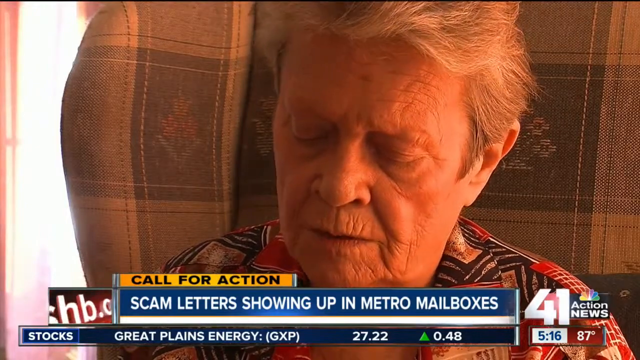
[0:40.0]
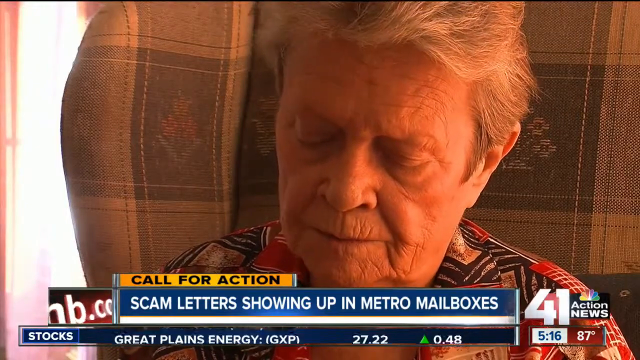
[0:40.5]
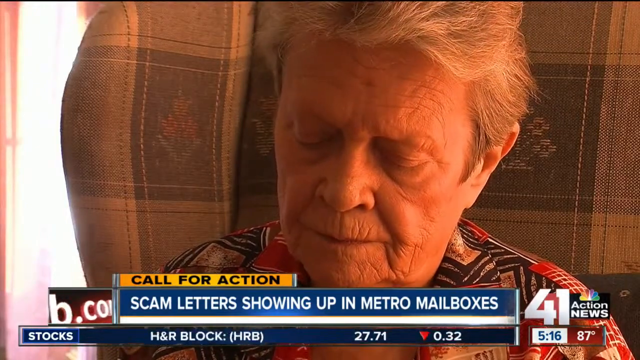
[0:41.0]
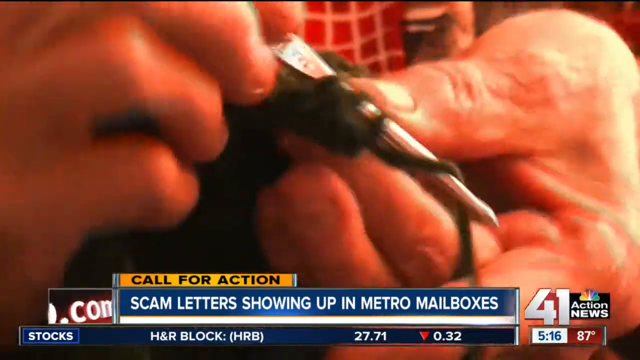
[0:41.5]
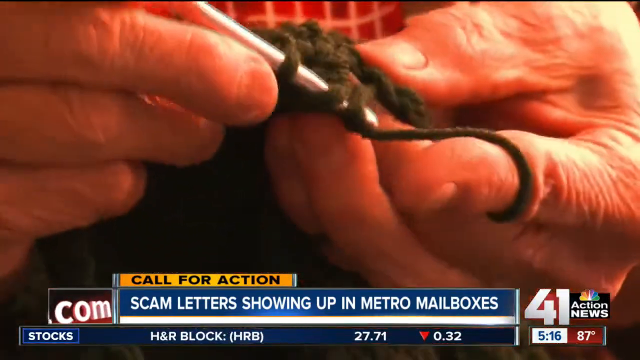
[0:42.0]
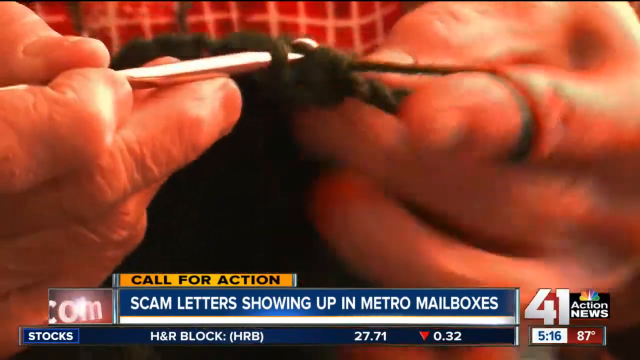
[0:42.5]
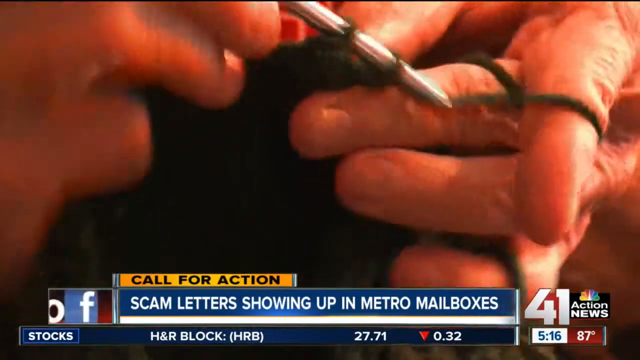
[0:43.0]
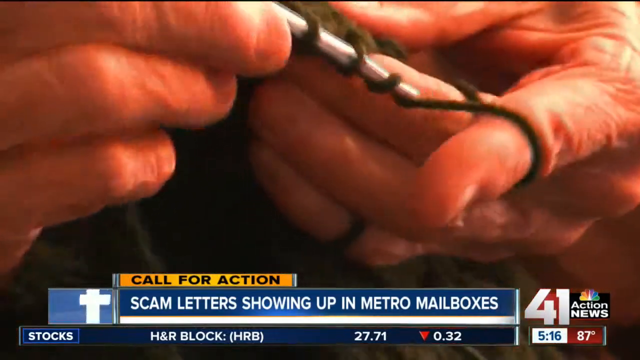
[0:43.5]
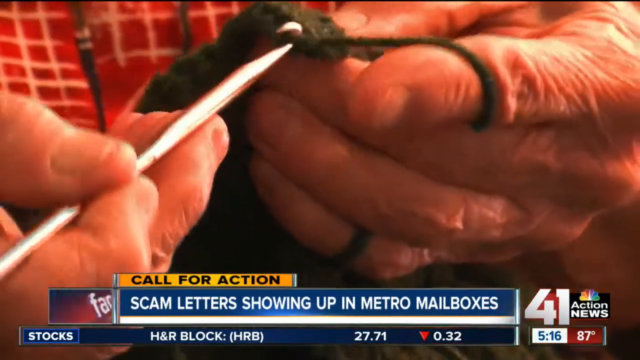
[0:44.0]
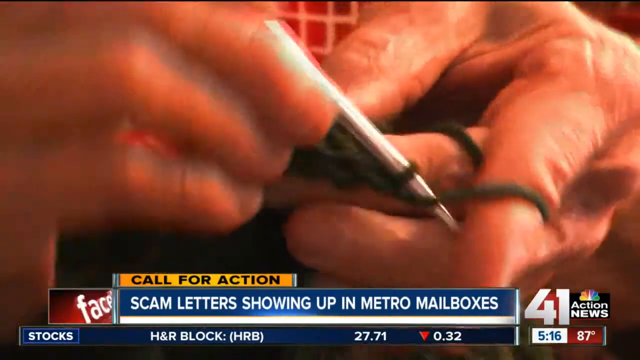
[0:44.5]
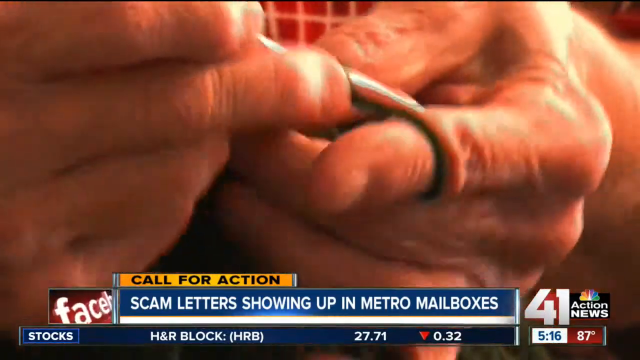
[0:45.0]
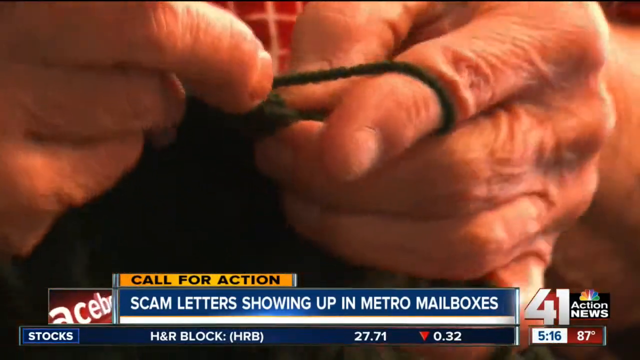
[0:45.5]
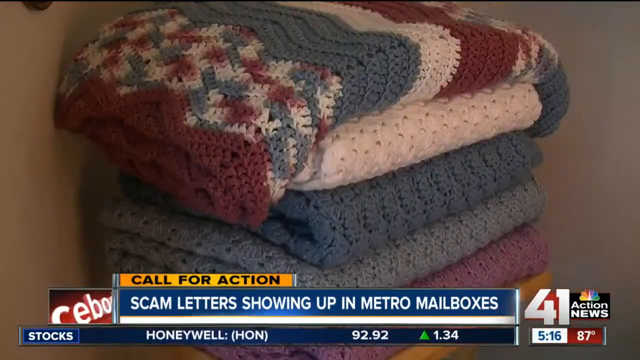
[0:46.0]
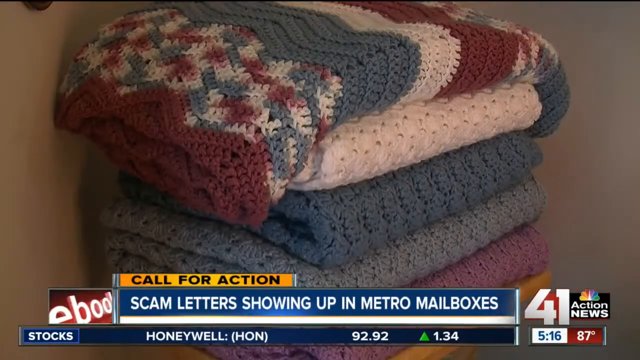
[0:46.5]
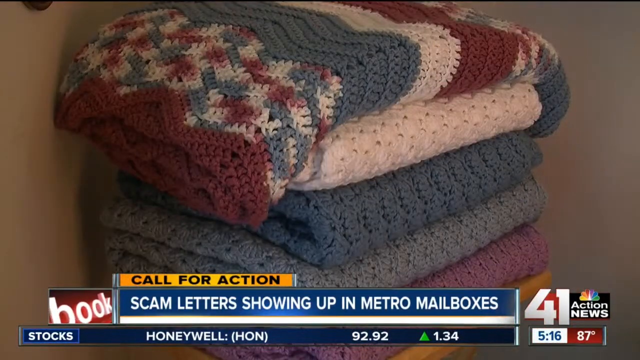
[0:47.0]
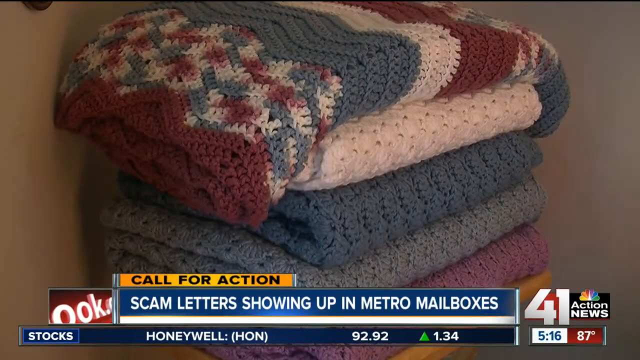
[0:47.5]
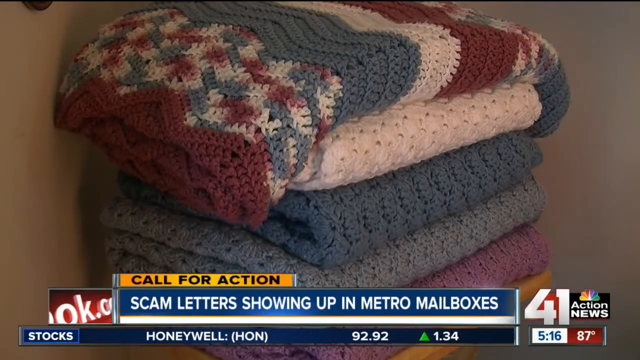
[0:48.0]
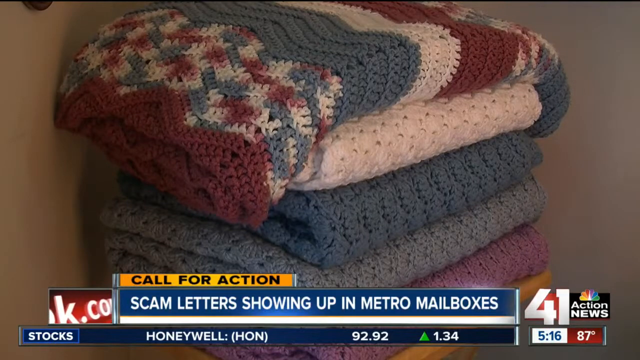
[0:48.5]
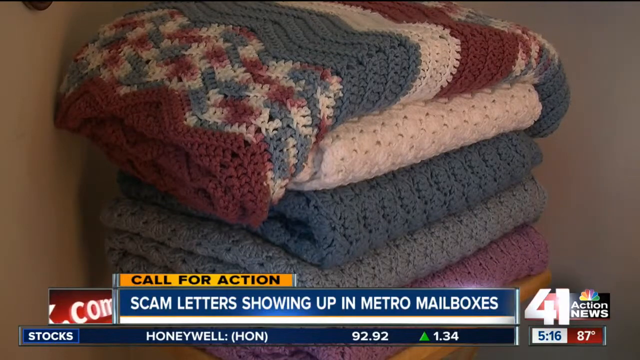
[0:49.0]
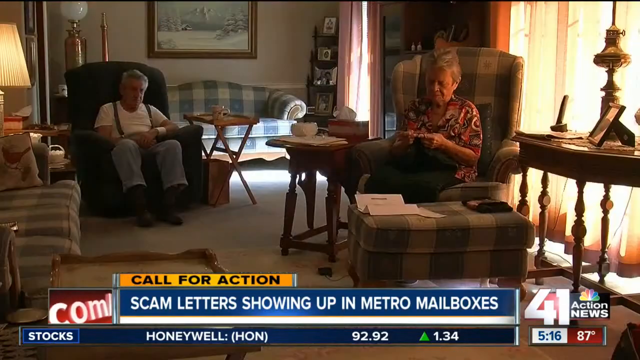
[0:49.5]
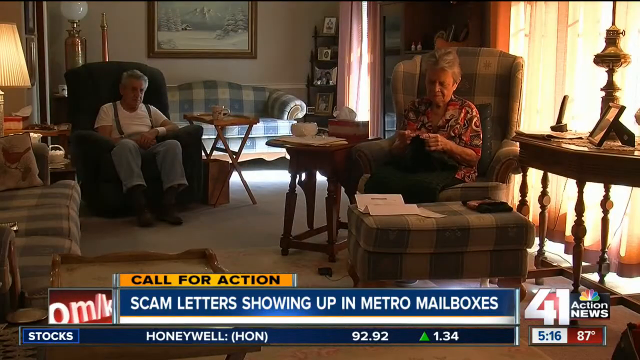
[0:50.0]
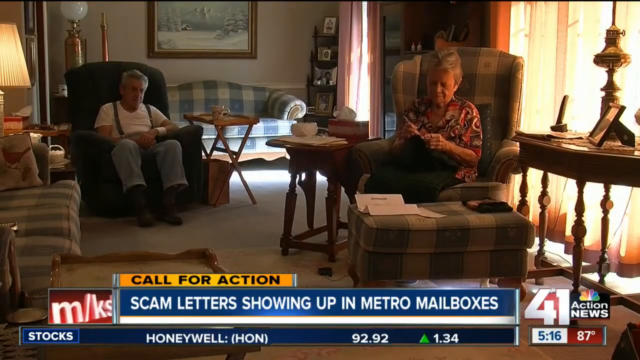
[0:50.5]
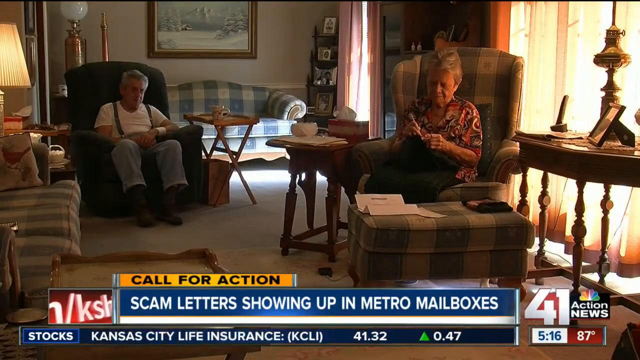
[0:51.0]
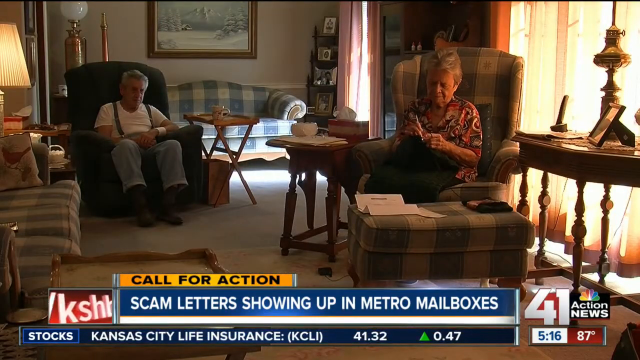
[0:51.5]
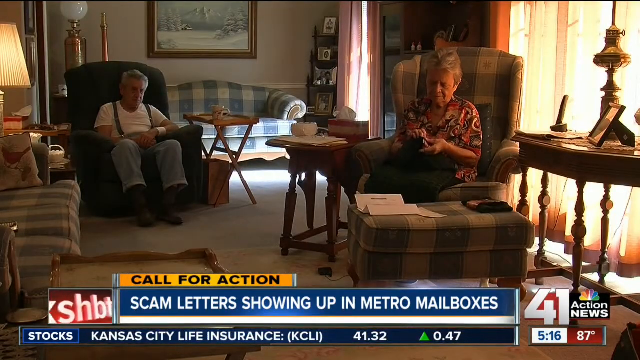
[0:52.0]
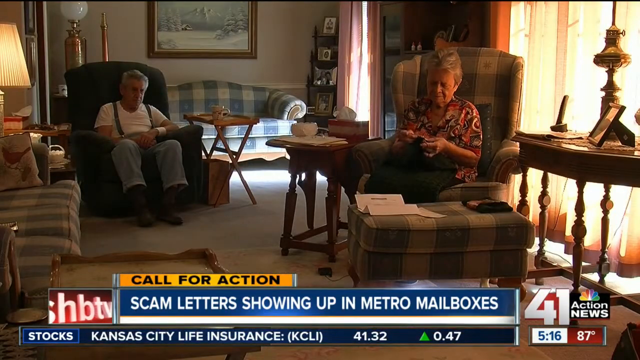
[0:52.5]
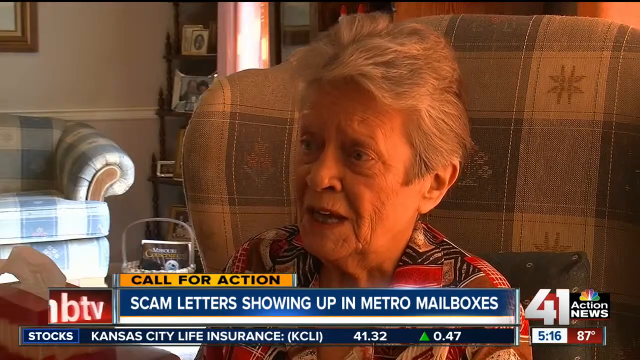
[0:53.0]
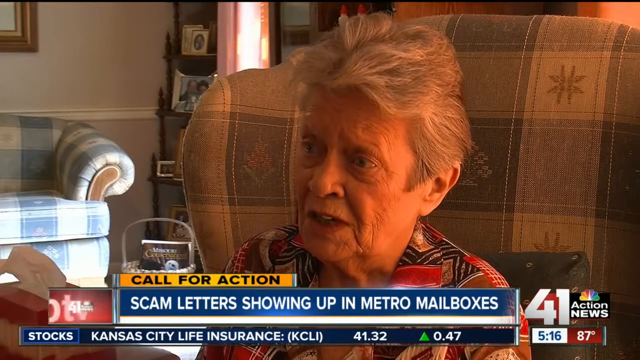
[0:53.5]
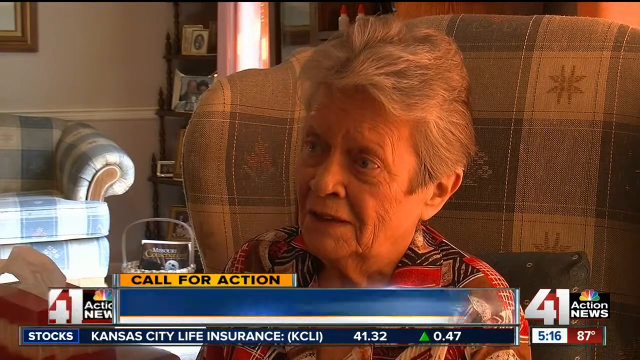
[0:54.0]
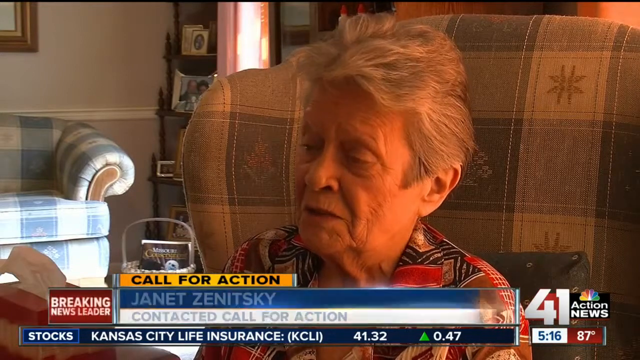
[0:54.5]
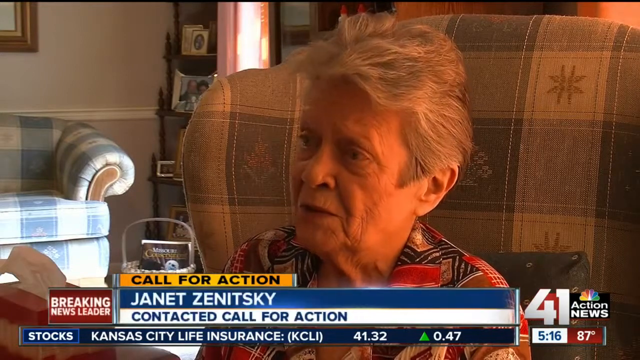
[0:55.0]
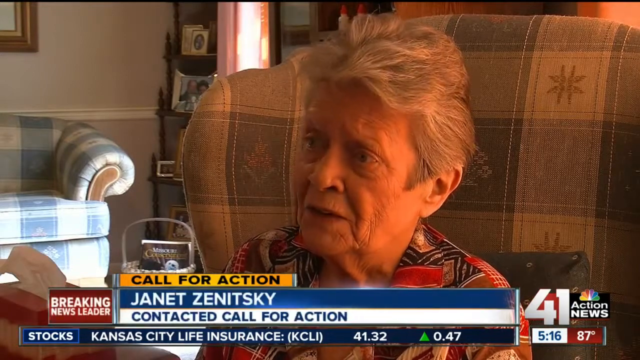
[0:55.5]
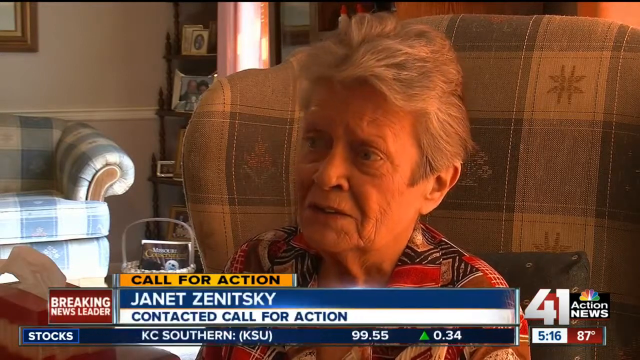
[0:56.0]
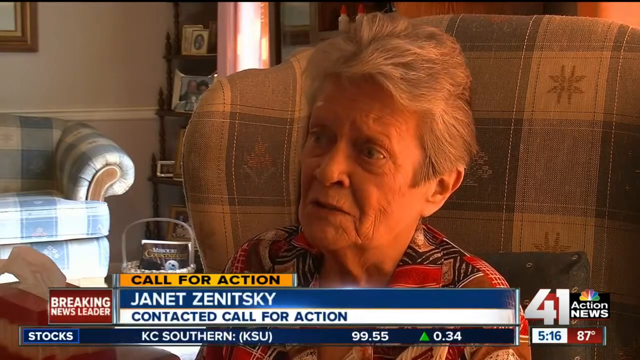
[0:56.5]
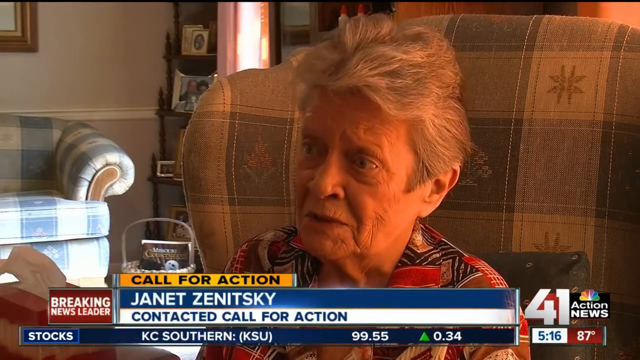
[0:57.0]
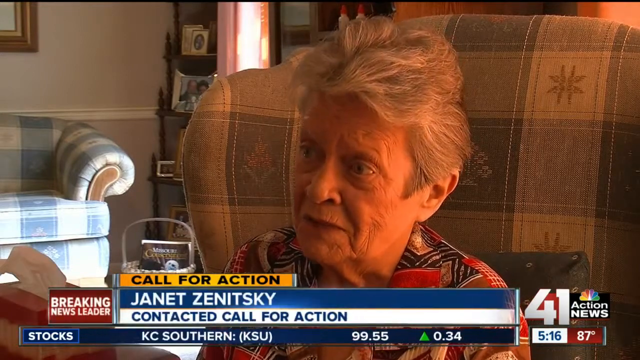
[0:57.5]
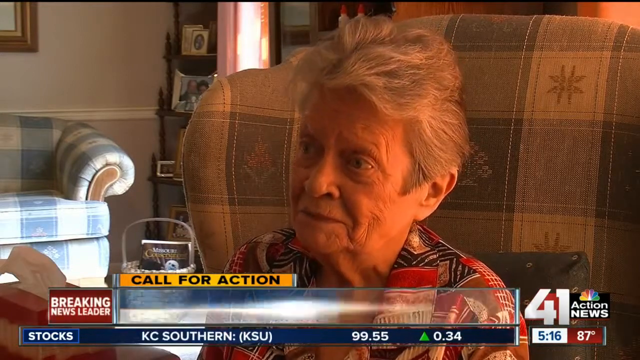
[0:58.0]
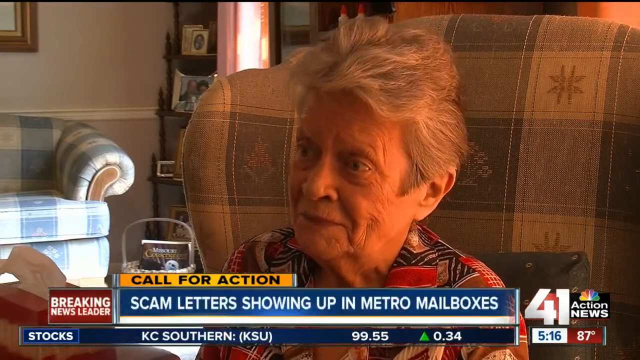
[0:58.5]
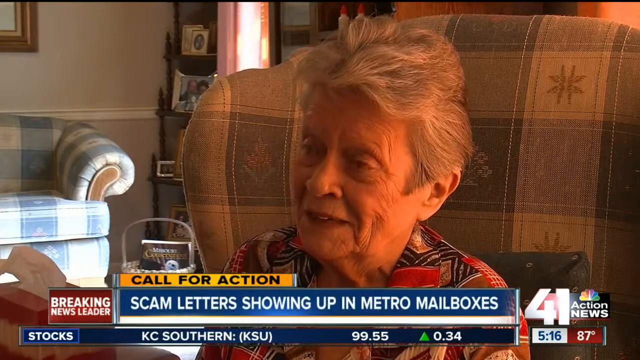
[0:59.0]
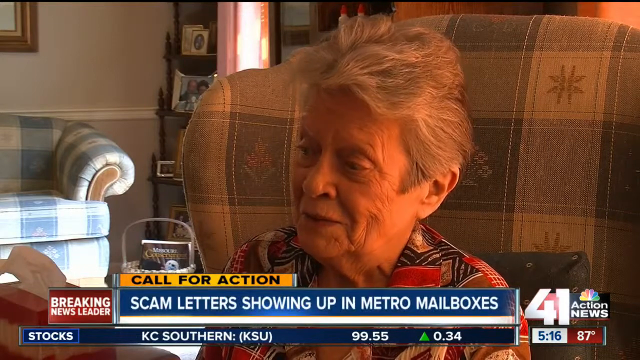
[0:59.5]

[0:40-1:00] The grandma on the couch shakes her head. Close-ups of her follow, including one of her head, before a long shot shows the living room with the grandpa in the shot. Another interview shot displays her name, Janet Zemeski, and she continues talking until she smiles. The couch looks white with gray. She wears a colorful black shirt with square patterns in red and shades of yellow with white. Her face is wrinkled, and her hair is slightly black but going gray.